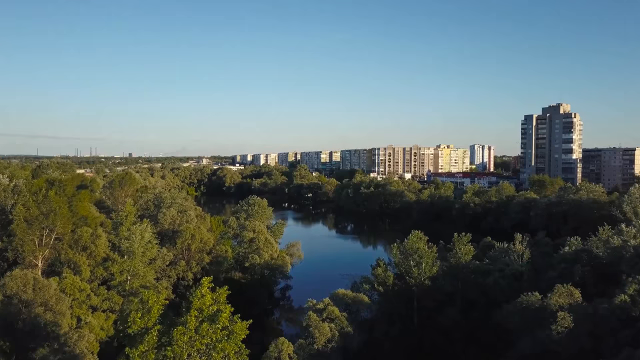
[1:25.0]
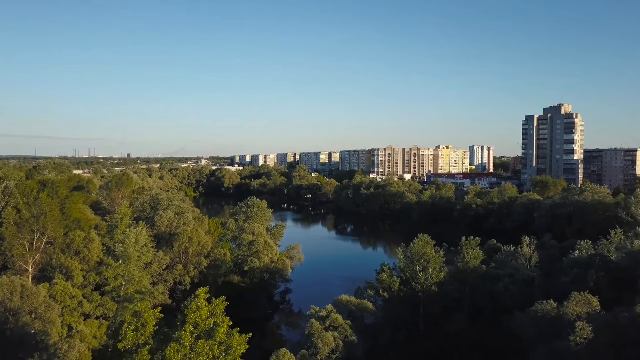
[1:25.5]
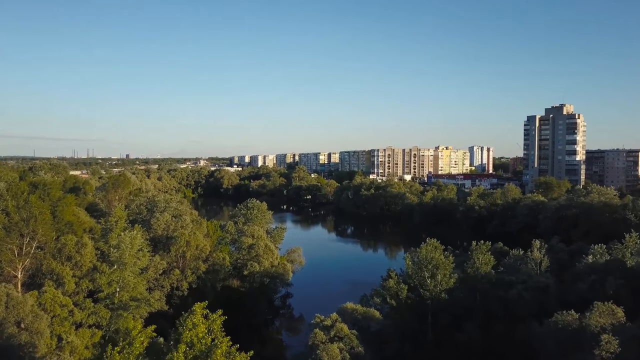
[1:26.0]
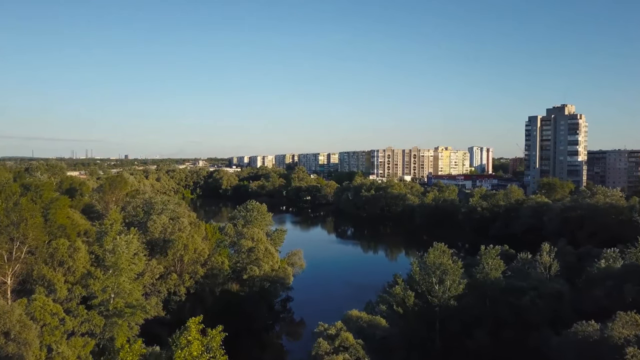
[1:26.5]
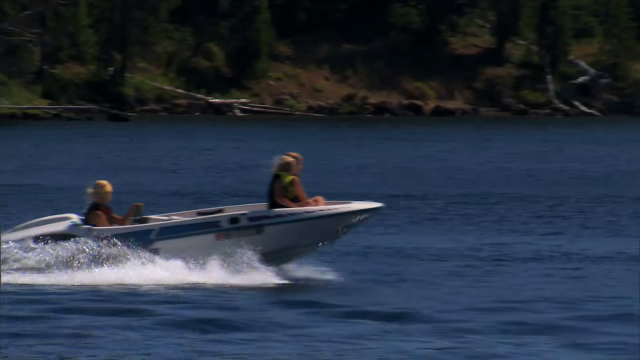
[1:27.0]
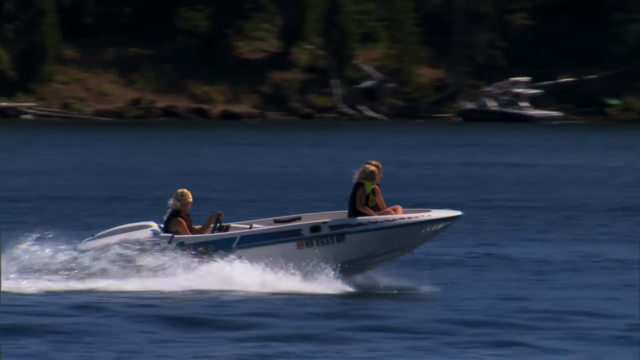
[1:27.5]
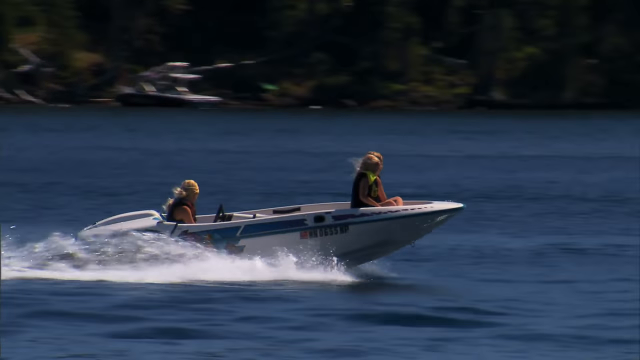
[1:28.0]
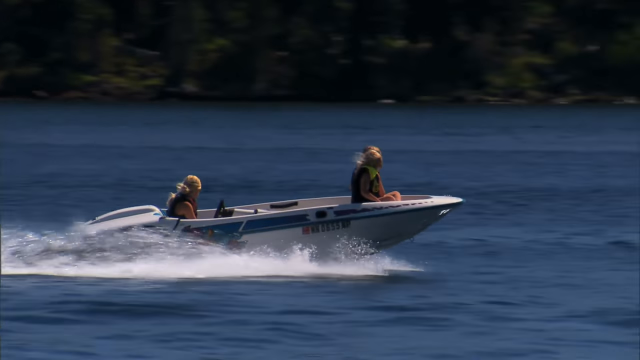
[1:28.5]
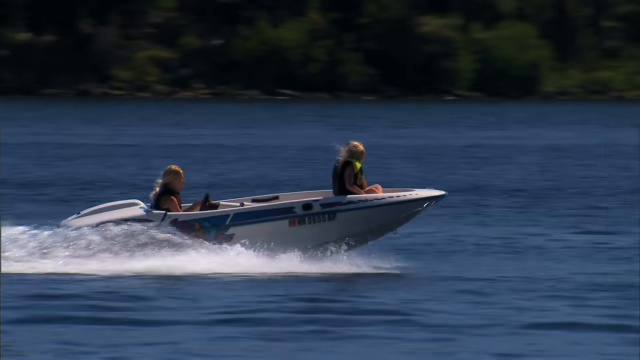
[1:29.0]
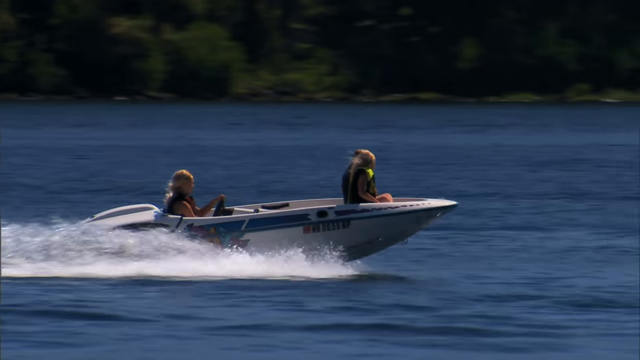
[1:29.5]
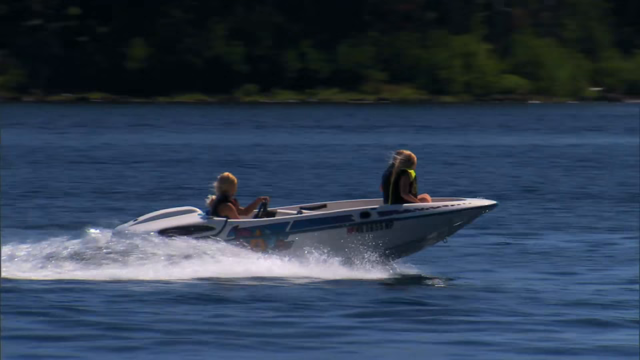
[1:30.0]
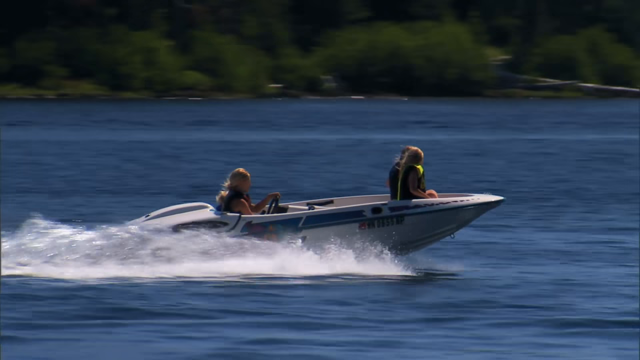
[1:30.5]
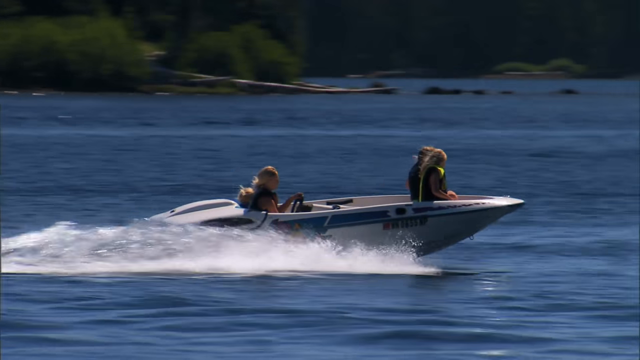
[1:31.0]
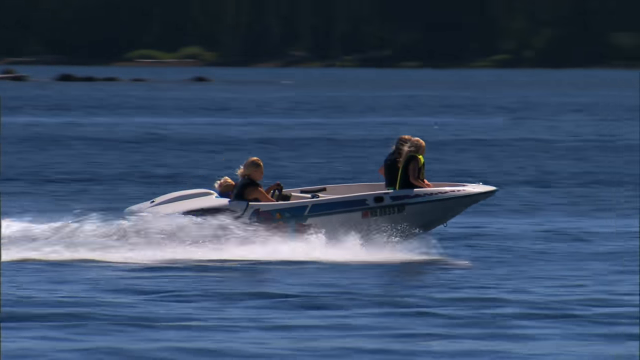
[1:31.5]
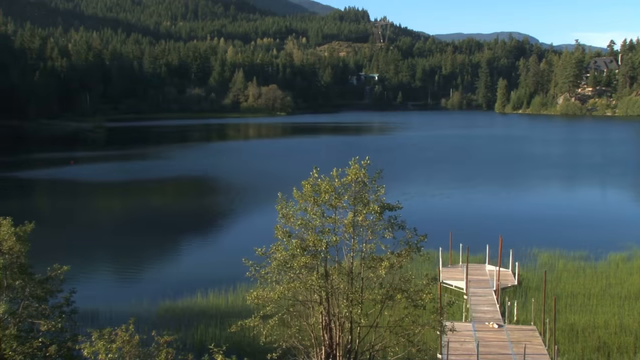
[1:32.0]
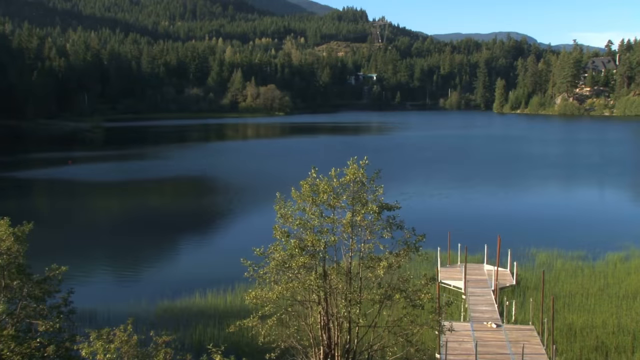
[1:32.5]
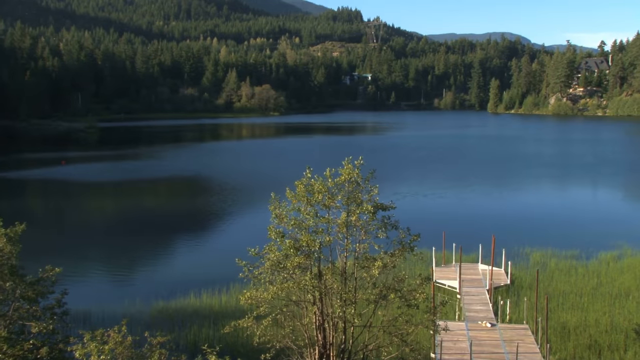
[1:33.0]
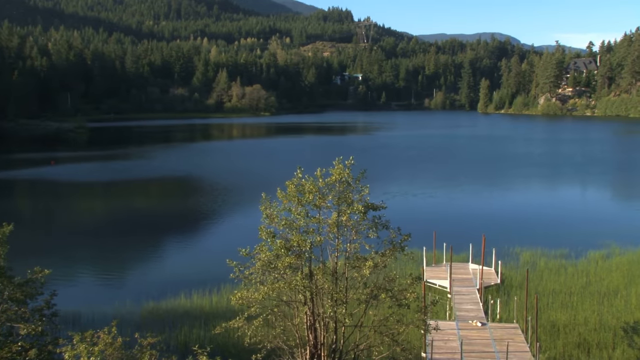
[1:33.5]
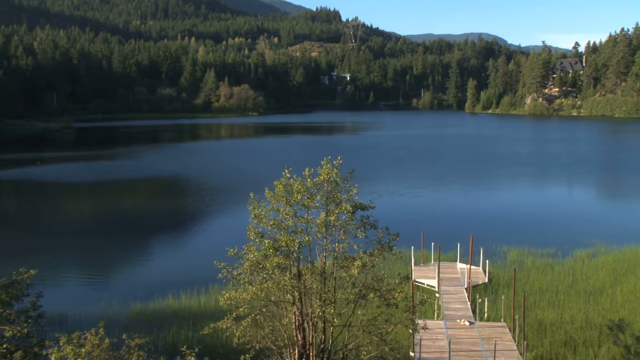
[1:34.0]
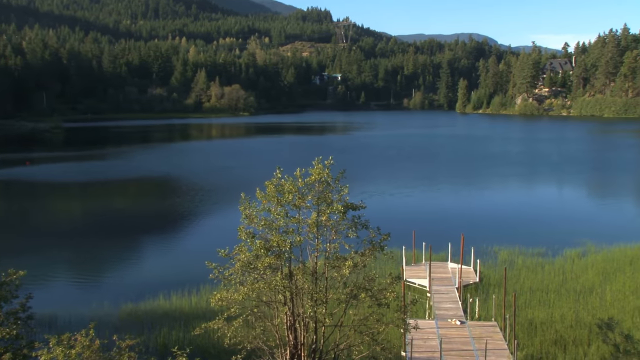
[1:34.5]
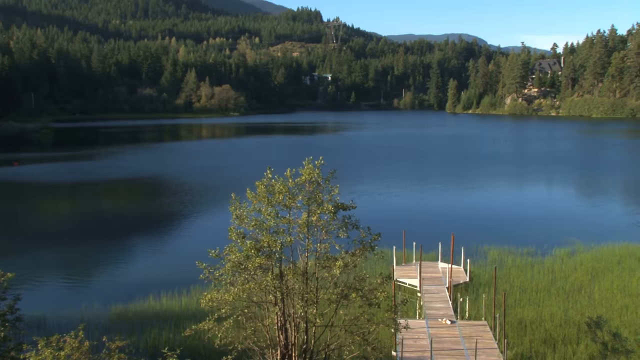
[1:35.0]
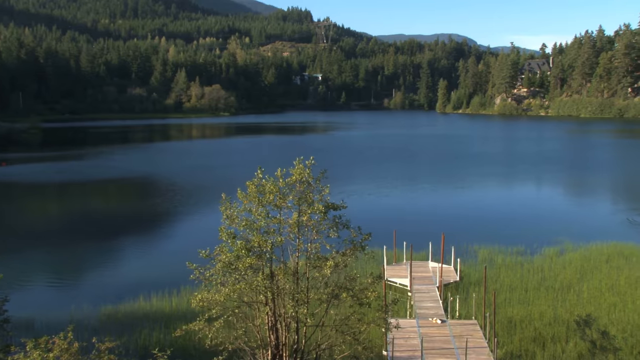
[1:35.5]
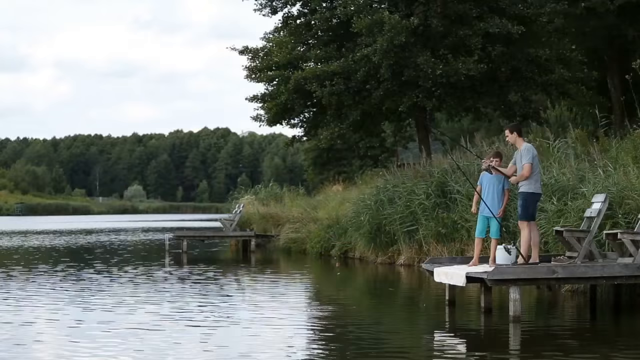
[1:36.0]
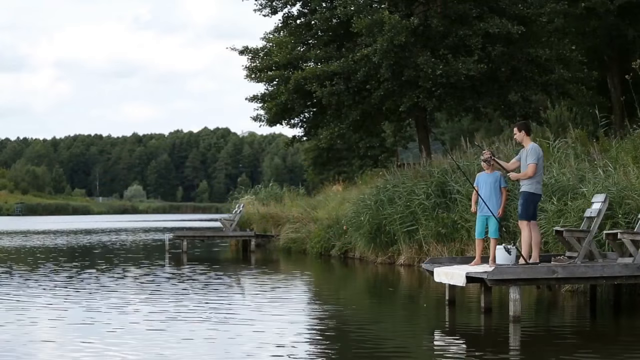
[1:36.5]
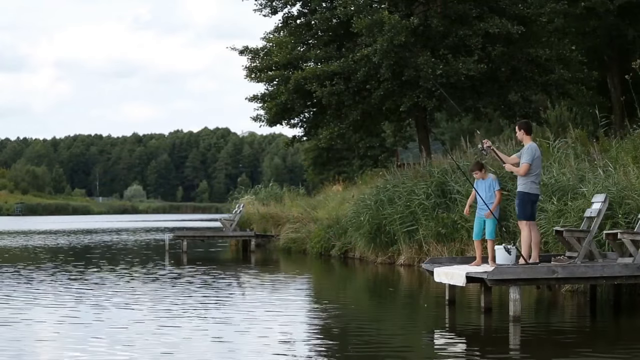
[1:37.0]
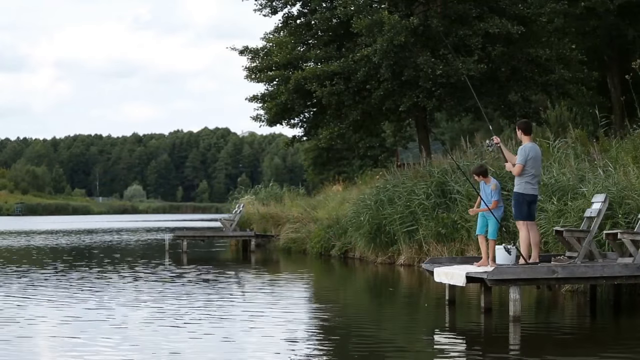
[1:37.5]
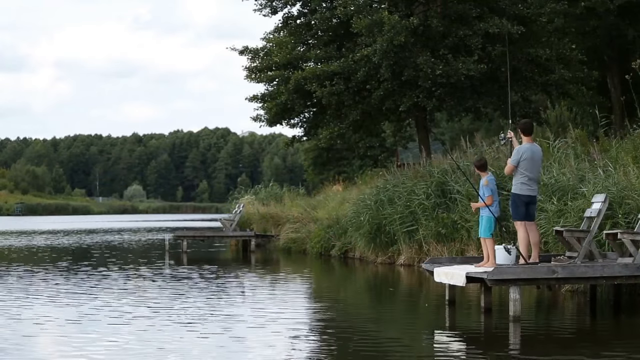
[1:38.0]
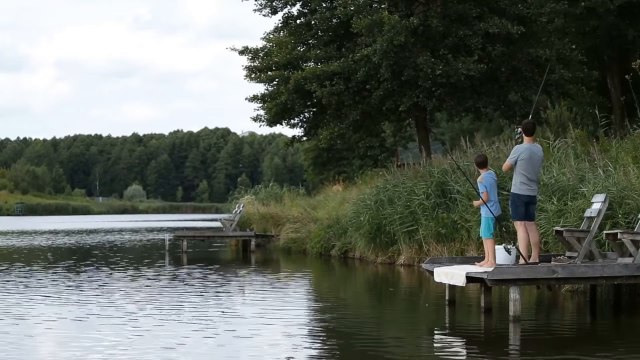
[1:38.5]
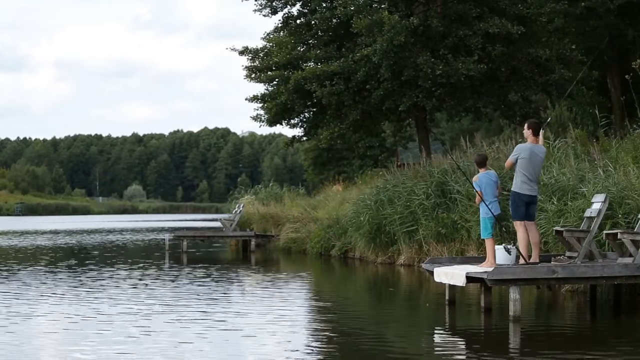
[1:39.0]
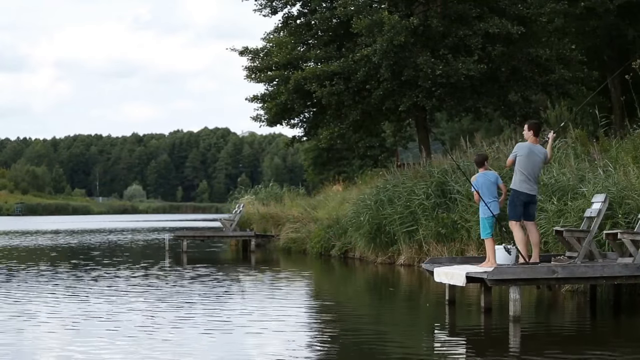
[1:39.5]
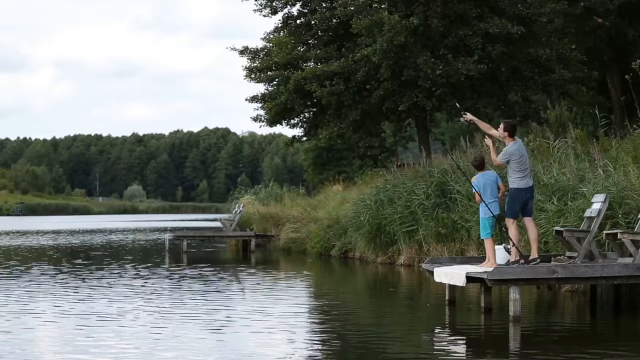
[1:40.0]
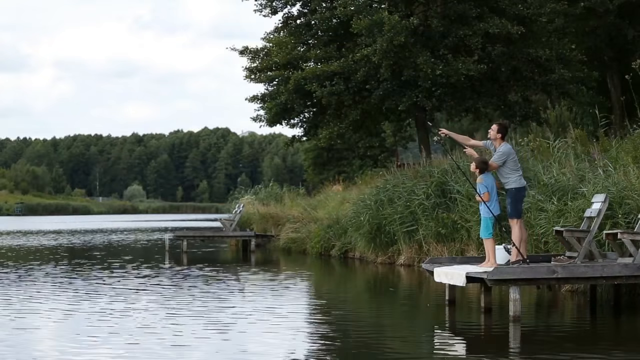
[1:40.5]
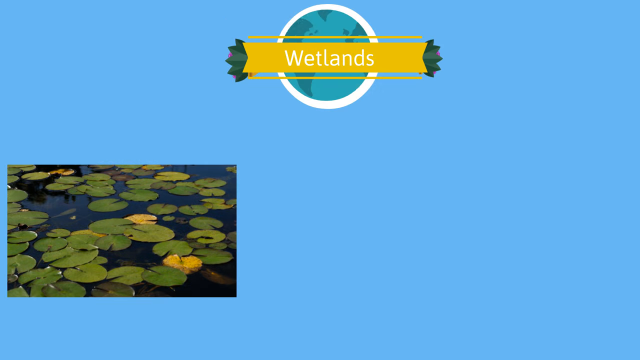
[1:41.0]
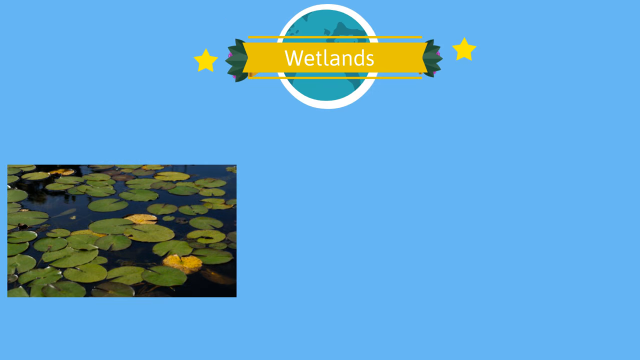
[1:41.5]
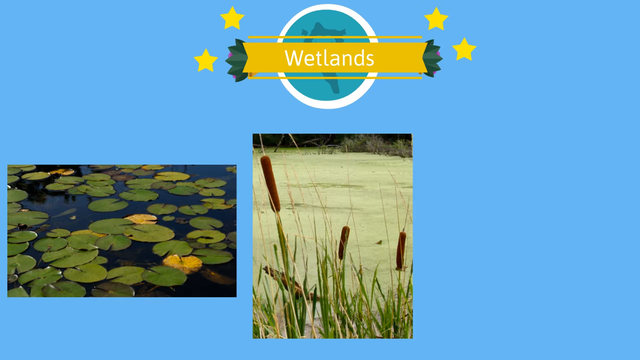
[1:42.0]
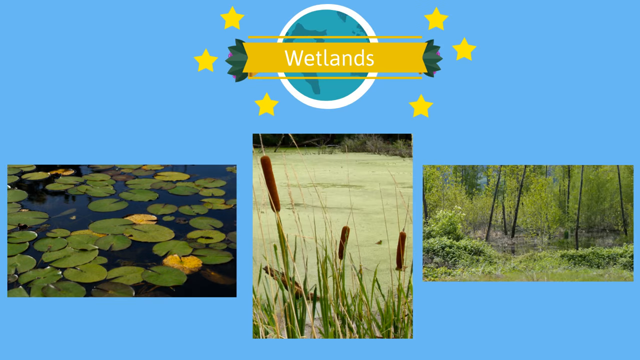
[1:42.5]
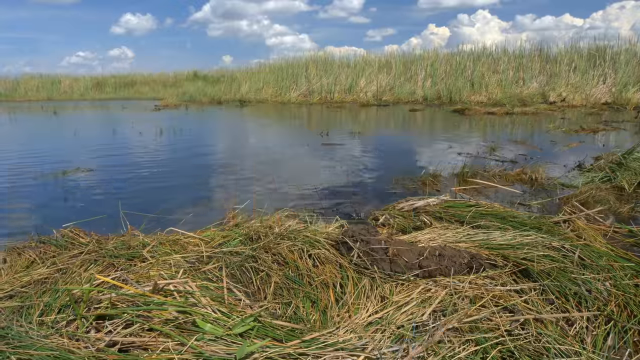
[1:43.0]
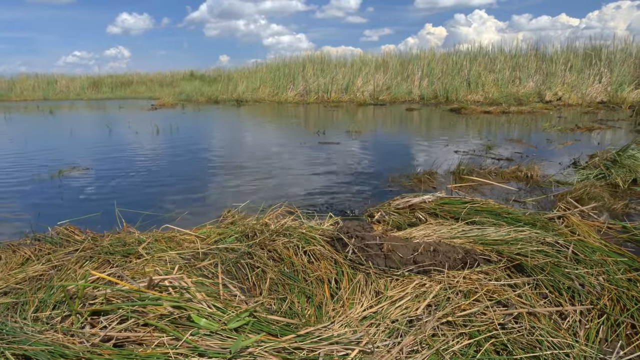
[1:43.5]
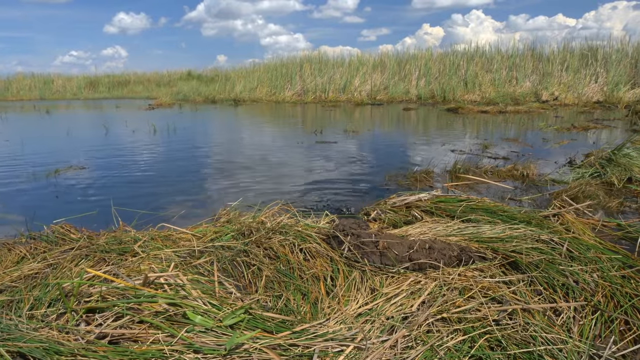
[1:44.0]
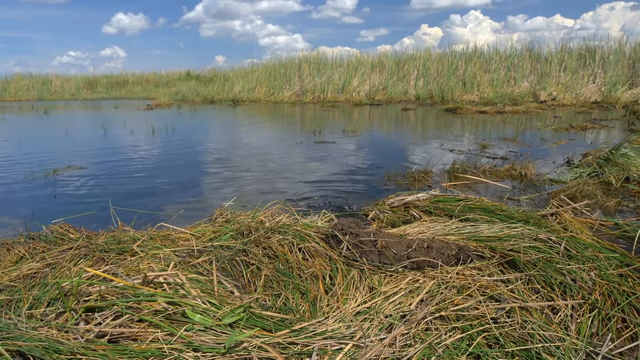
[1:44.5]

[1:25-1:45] People go boating on what appears to be a very large lake, their boat moving at high speed. The lake is very calm, with a pier where two young males stand at the end, casting their rods and fishing. A marshy area has tall grasses and cattails, with vegetation along the shore and lily pads in the ponds. Other piers are in the water, with other boats parked at them. Big trees surround the water.